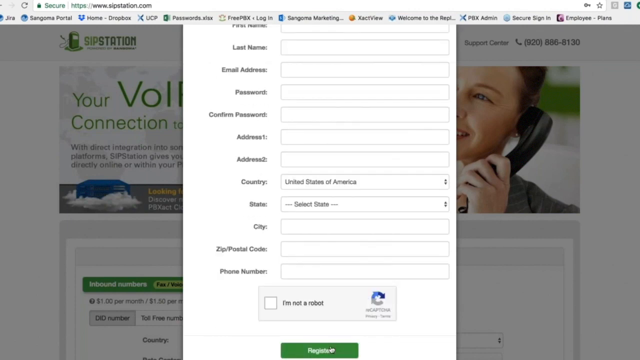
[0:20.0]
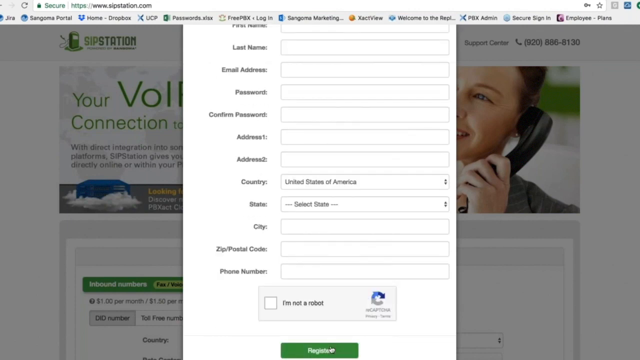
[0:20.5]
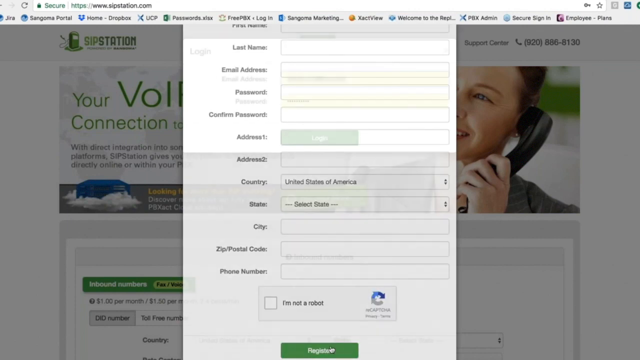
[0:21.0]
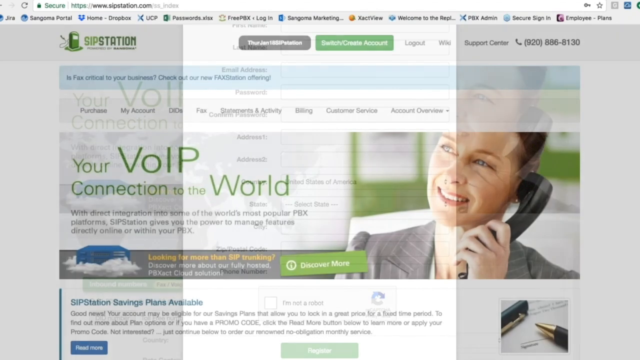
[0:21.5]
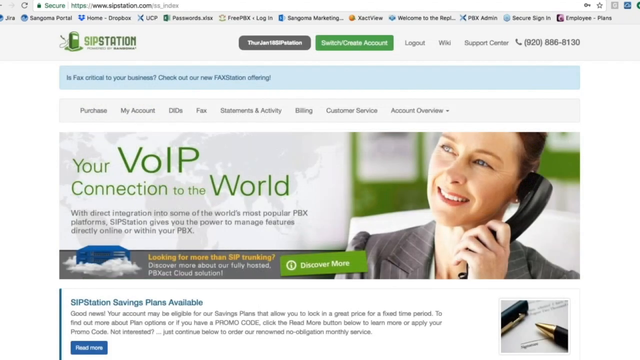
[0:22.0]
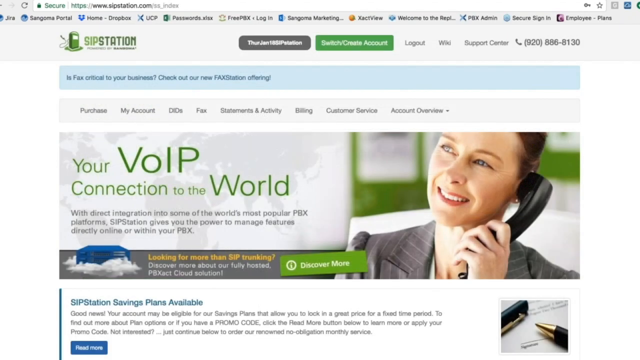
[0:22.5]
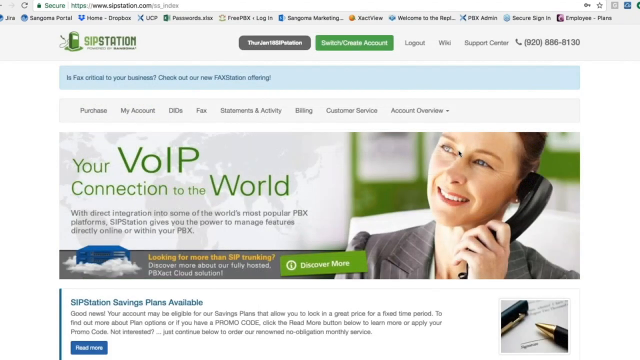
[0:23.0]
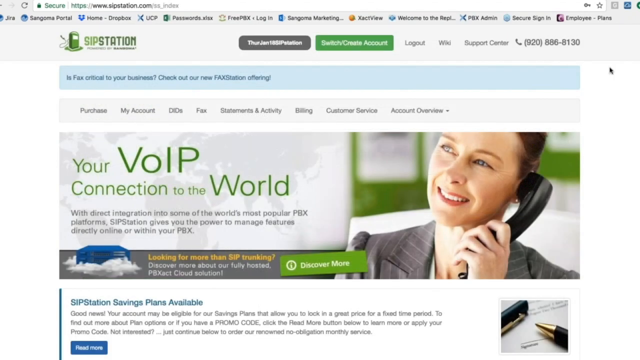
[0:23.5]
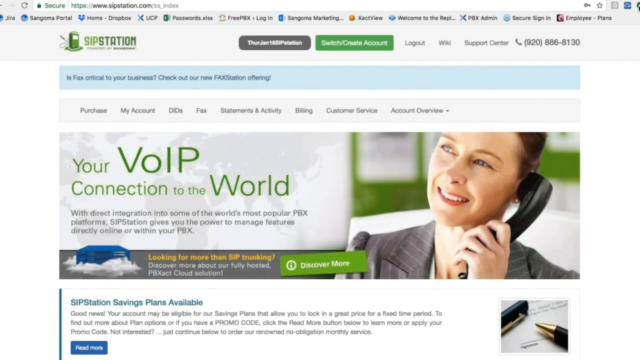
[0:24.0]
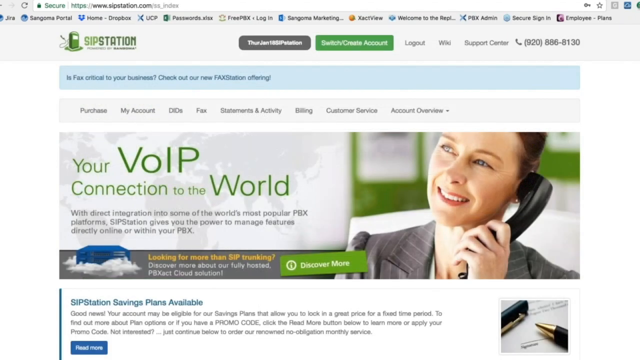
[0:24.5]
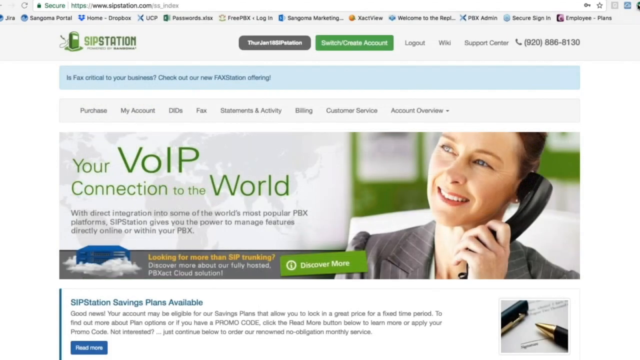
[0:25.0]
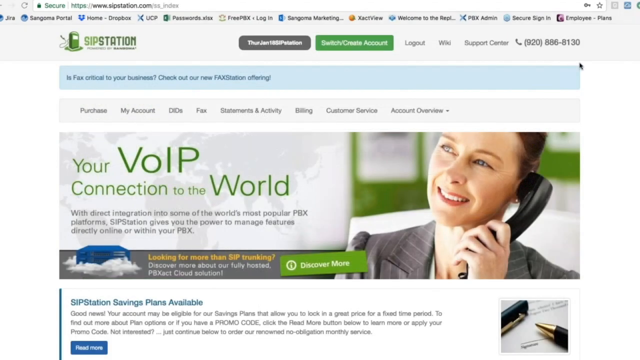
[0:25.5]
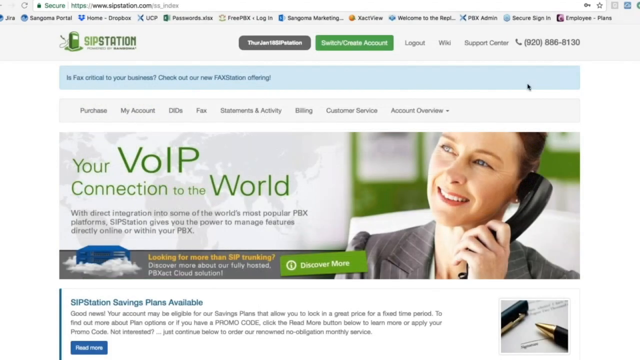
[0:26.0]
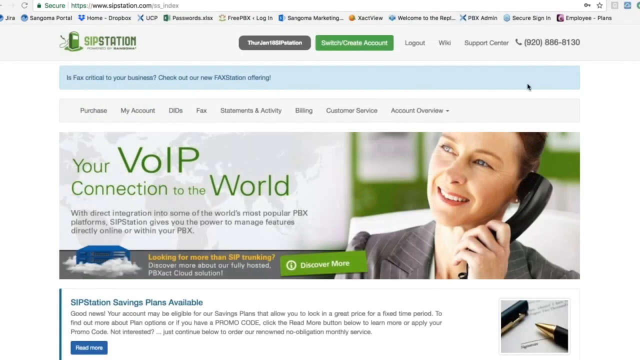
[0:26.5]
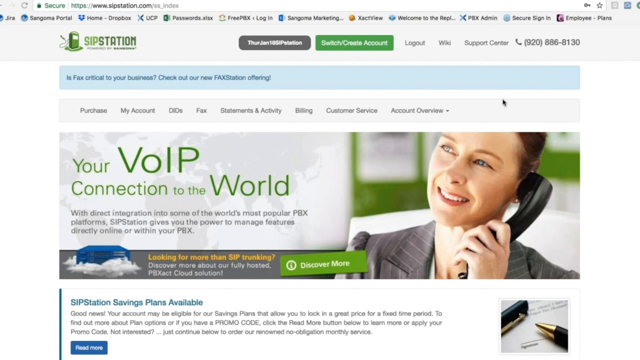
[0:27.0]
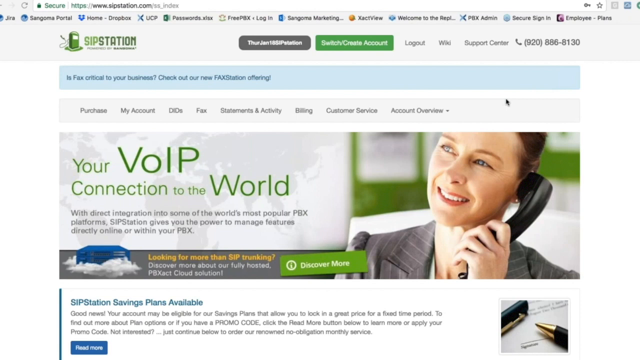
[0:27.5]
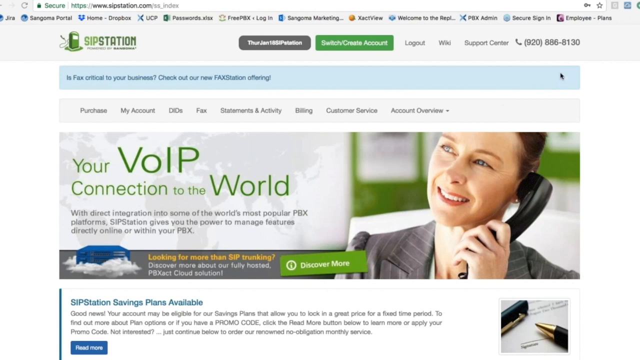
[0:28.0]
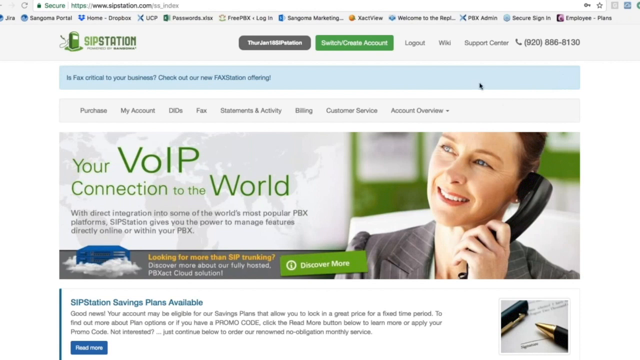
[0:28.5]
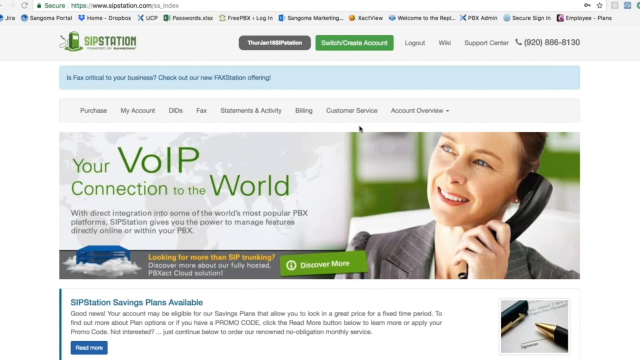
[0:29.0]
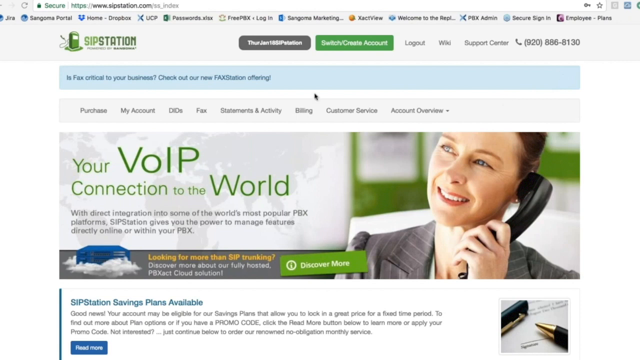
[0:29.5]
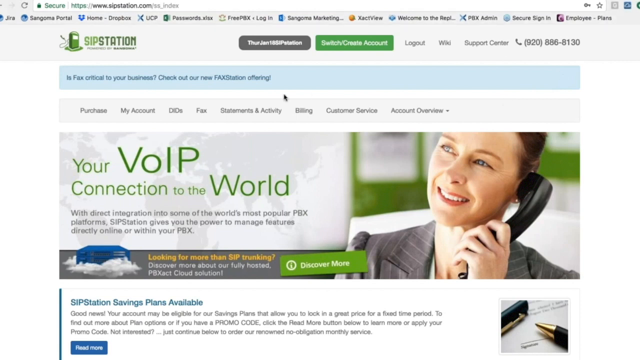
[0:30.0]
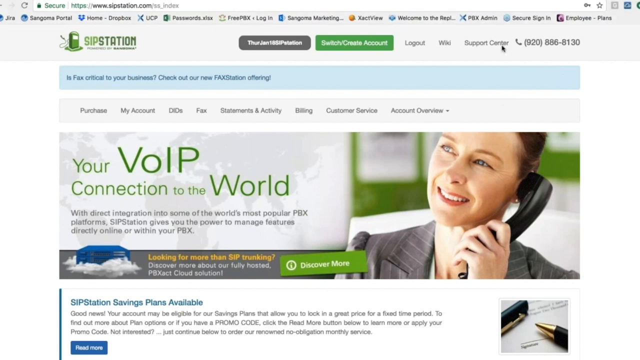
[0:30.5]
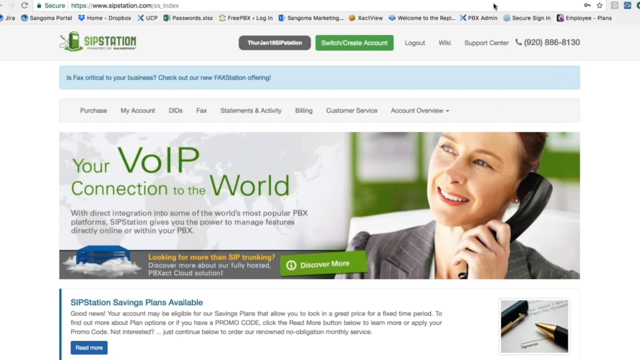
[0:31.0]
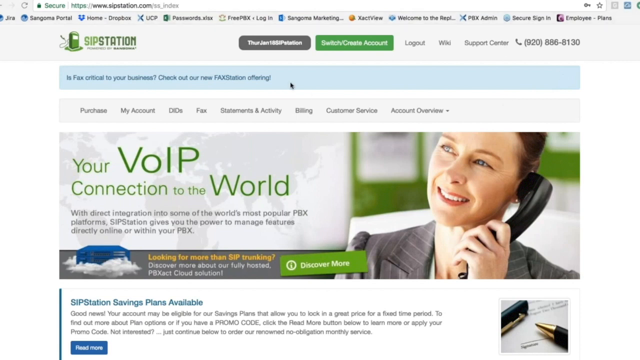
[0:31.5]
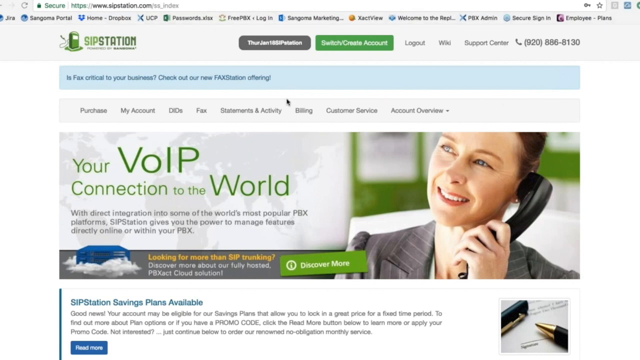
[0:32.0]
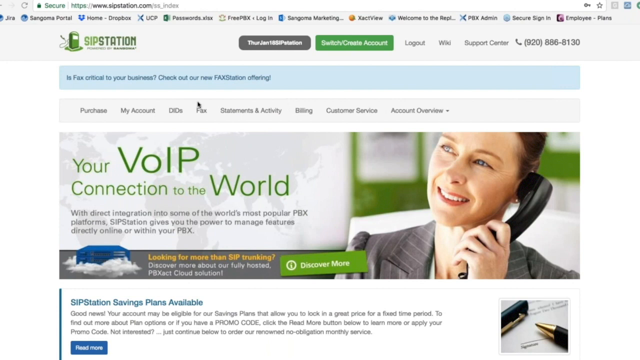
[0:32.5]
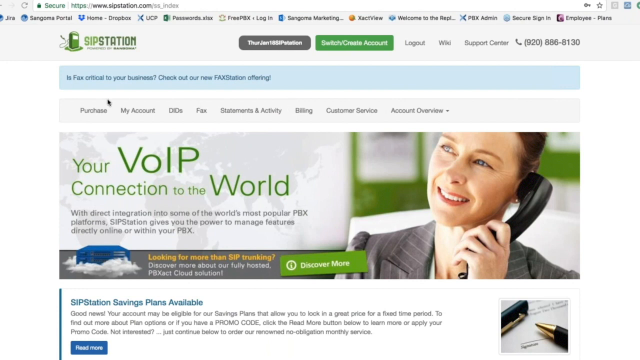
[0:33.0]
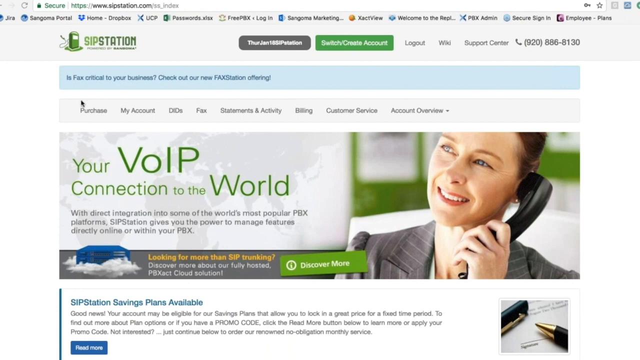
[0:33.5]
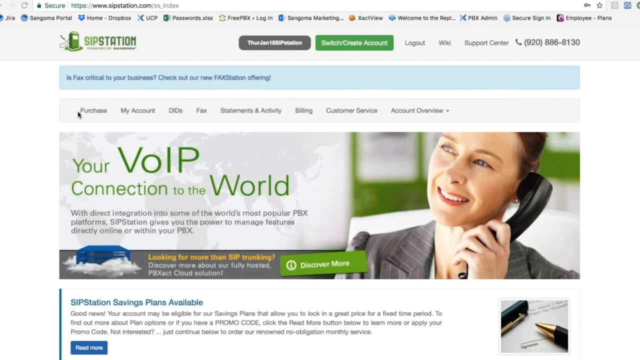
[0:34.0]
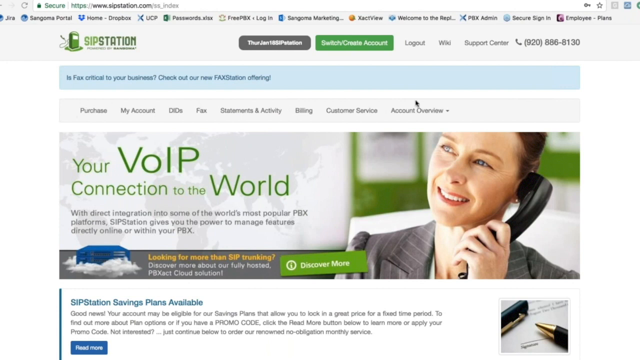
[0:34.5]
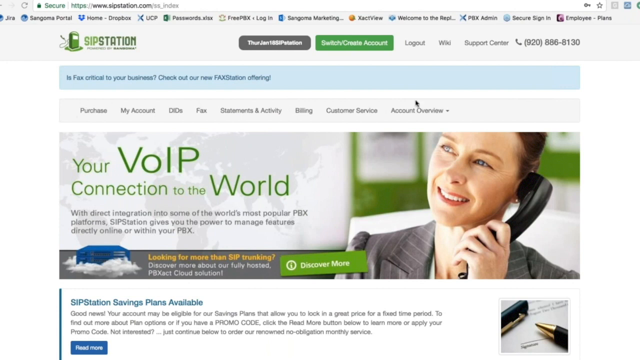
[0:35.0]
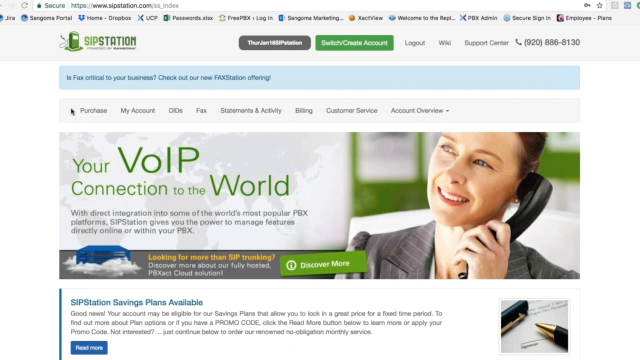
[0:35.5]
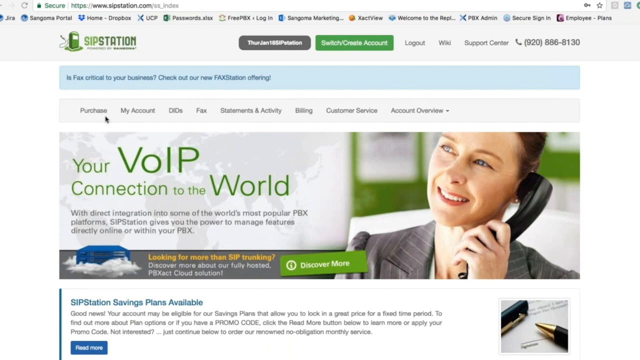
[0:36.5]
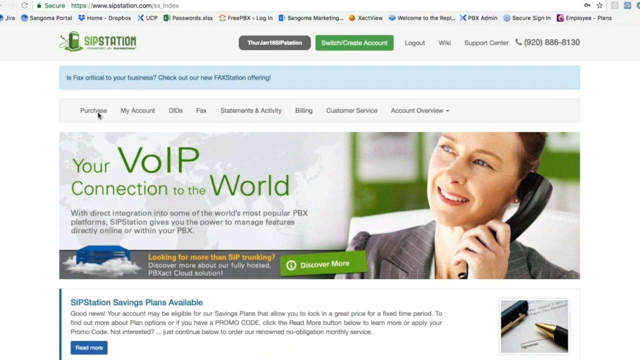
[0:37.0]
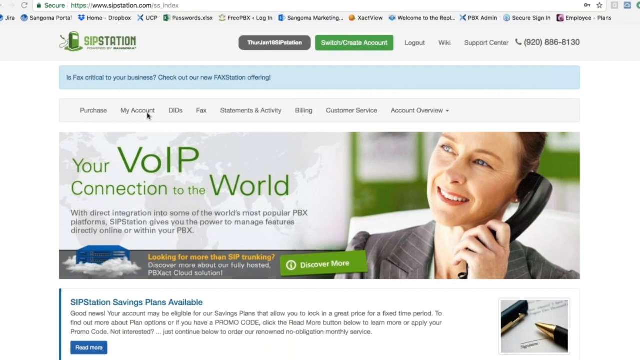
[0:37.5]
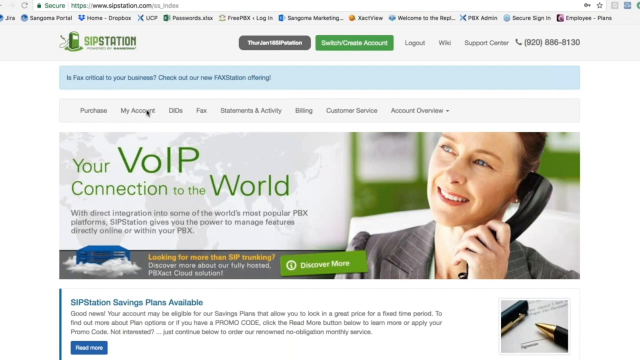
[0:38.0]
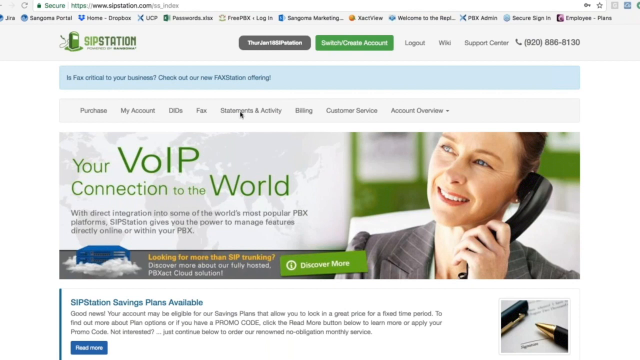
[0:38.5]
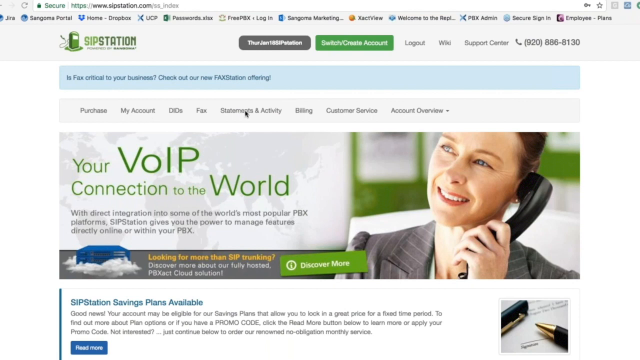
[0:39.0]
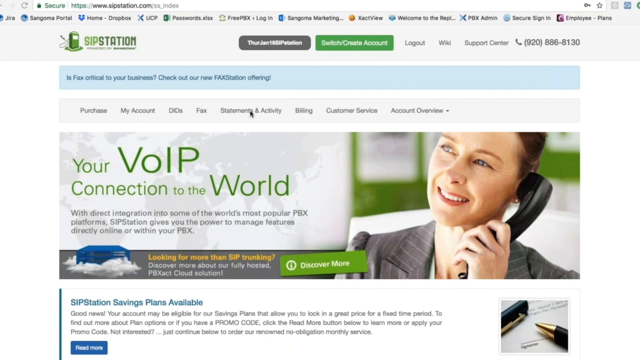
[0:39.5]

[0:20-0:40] A white box takes up the majority of the screen, showing various fields that can be filled in, such as zip code, phone number, name, email address, password, country, and state. A button appears to be clicked, and the view goes to the main page for SIPStation, which says "your VOIP connection to the world." There is a woman holding a phone to her ear and a picture beside that. A mouse cursor moves around the right side of the page, just above where the woman is holding the phone, then moves around all over the web page in no specific fashion before it starts highlighting "Purchase," "My Account," and other links on the toolbar running horizontally across the top of the page.